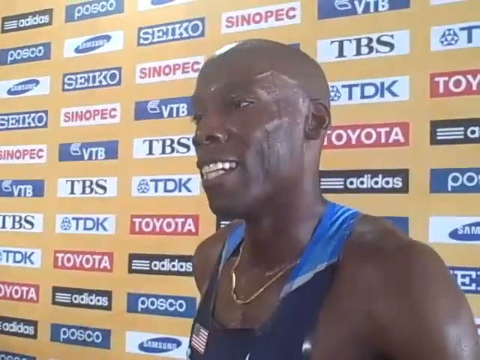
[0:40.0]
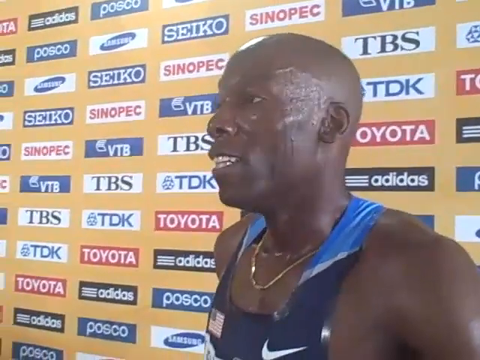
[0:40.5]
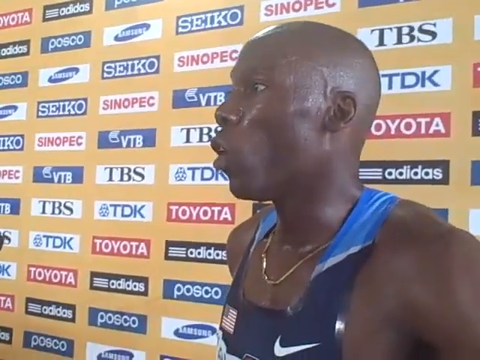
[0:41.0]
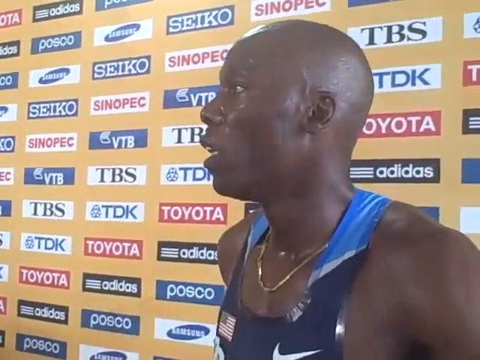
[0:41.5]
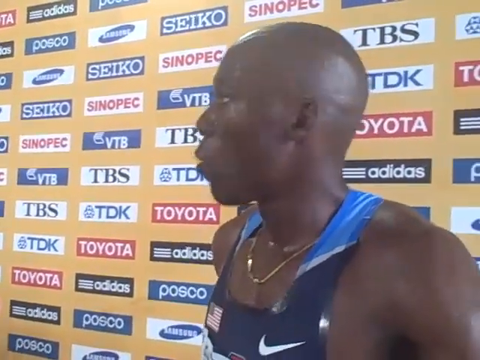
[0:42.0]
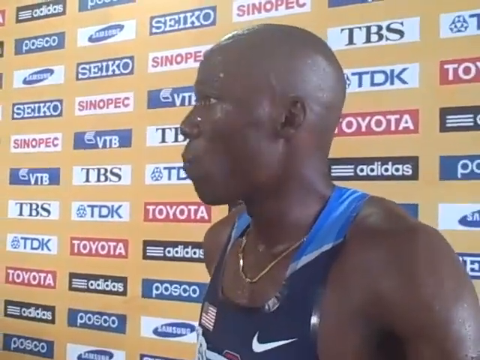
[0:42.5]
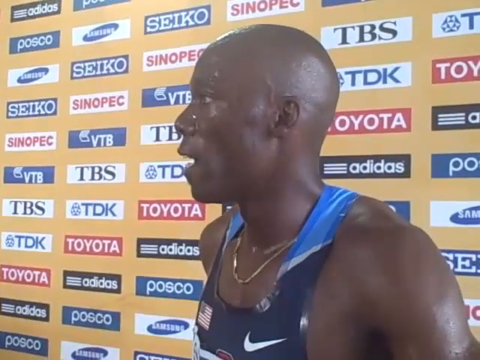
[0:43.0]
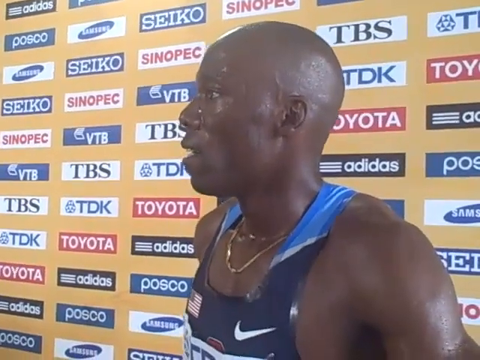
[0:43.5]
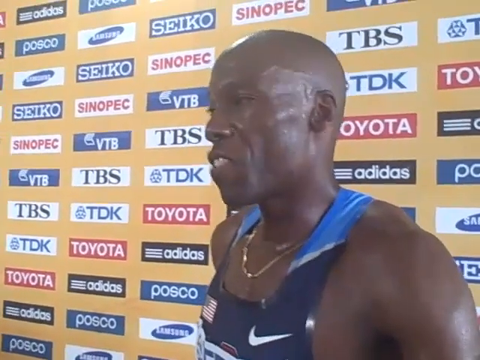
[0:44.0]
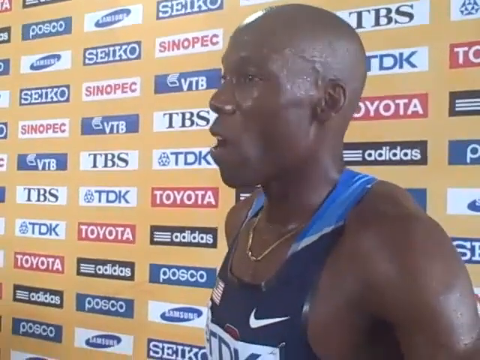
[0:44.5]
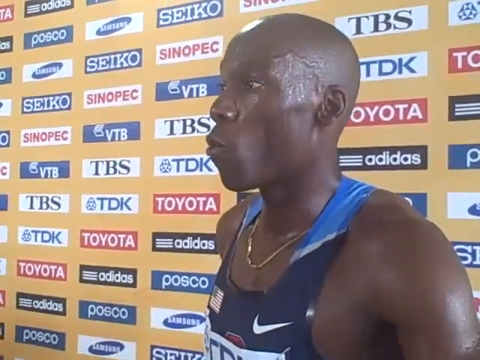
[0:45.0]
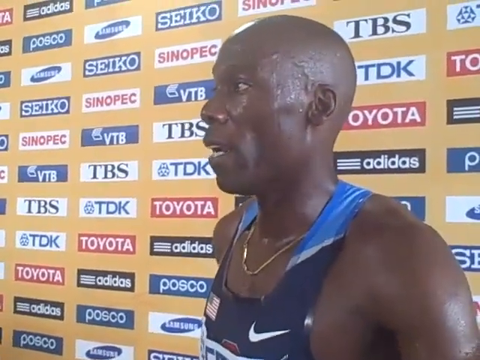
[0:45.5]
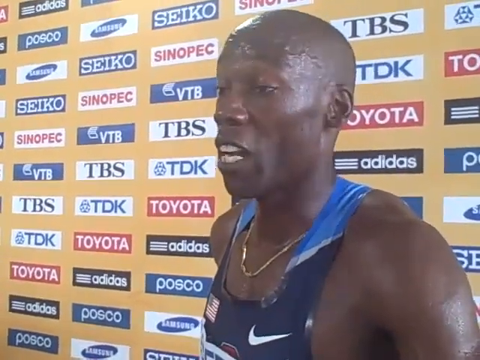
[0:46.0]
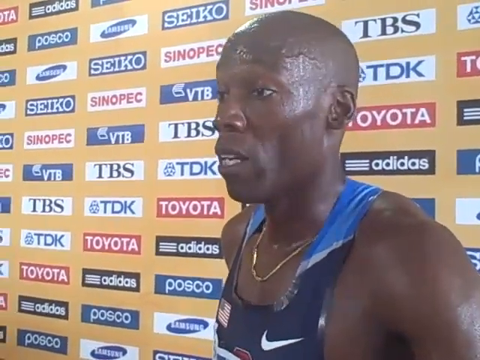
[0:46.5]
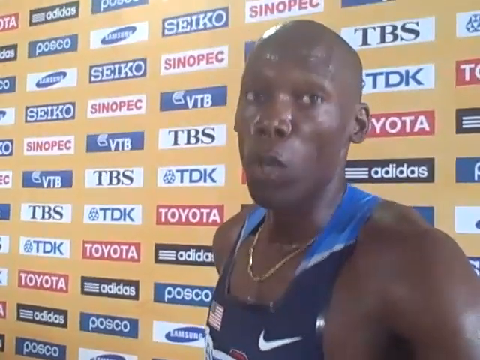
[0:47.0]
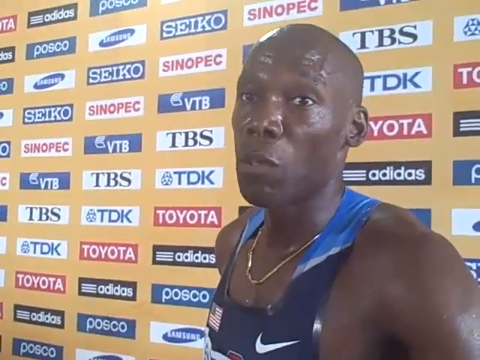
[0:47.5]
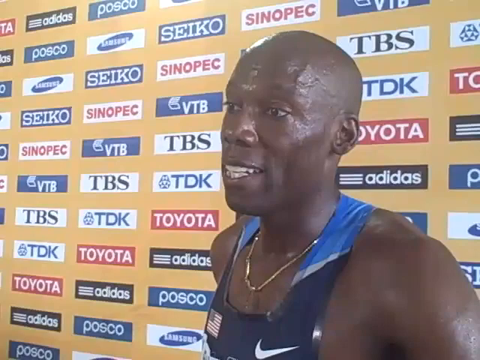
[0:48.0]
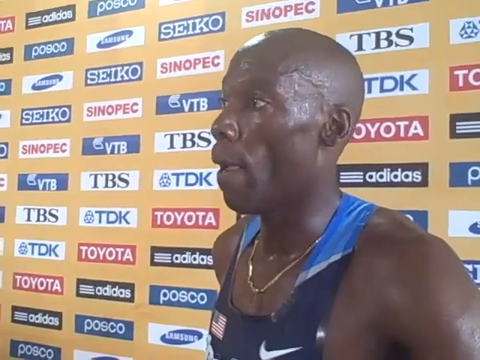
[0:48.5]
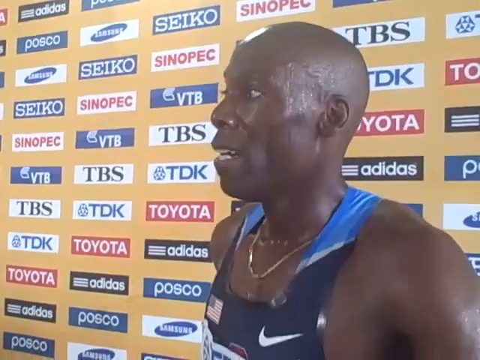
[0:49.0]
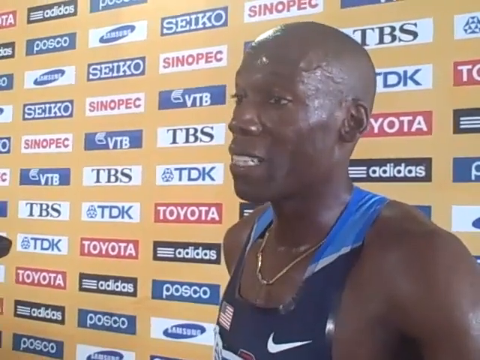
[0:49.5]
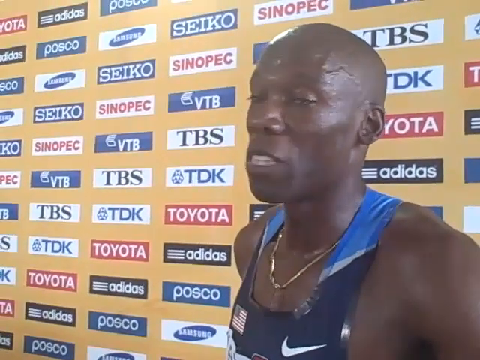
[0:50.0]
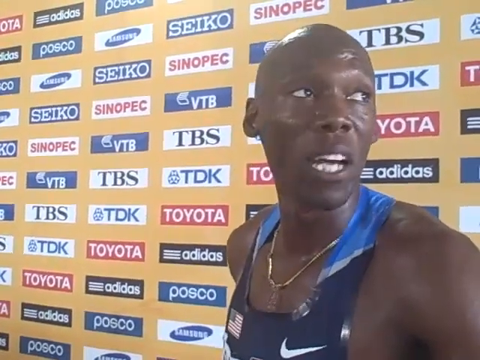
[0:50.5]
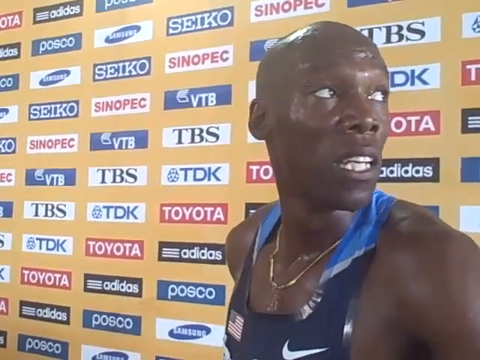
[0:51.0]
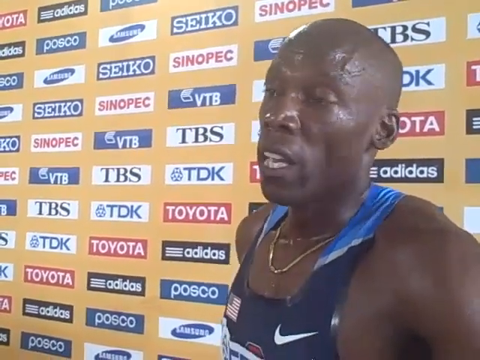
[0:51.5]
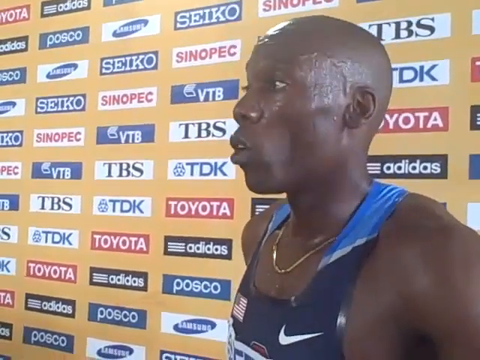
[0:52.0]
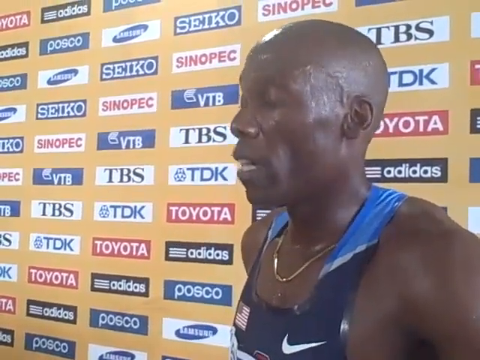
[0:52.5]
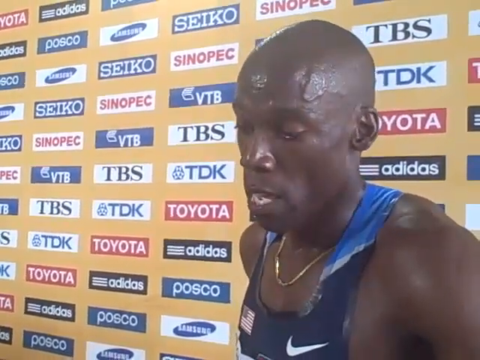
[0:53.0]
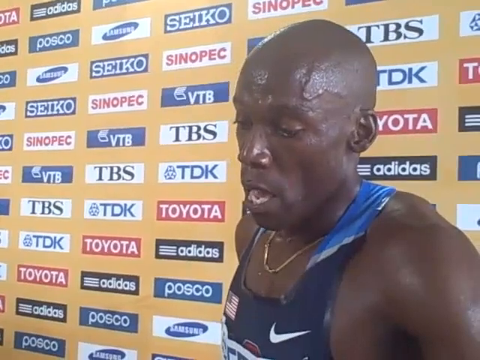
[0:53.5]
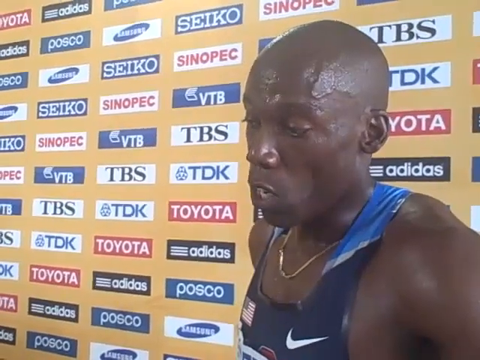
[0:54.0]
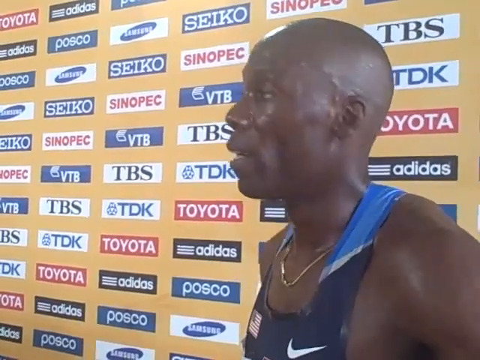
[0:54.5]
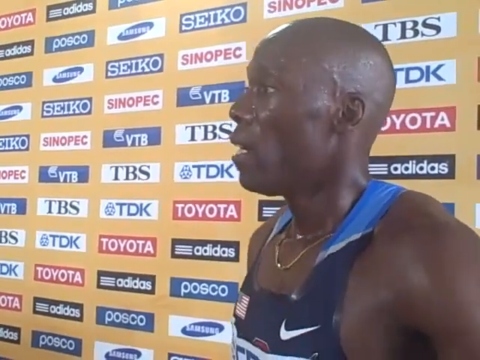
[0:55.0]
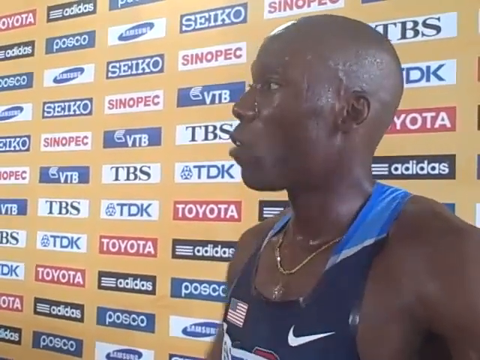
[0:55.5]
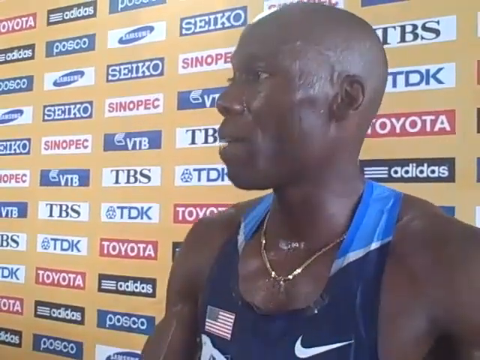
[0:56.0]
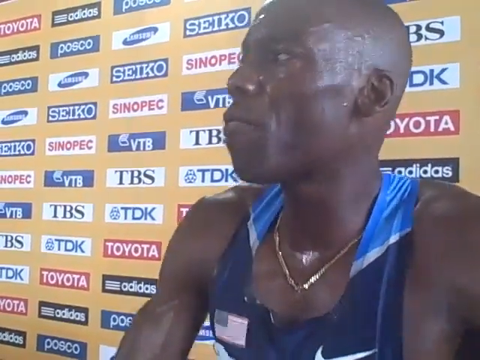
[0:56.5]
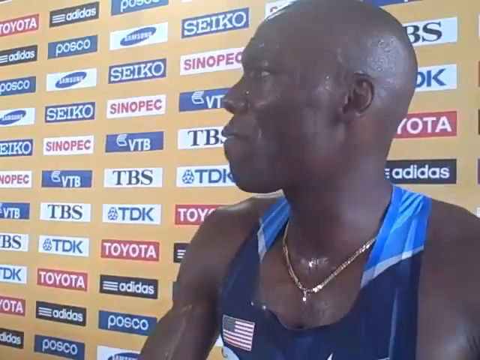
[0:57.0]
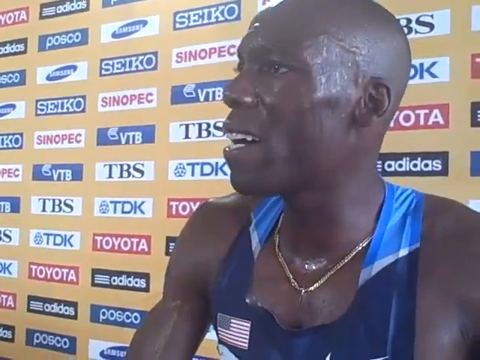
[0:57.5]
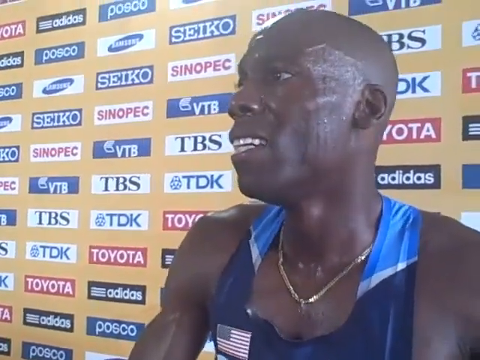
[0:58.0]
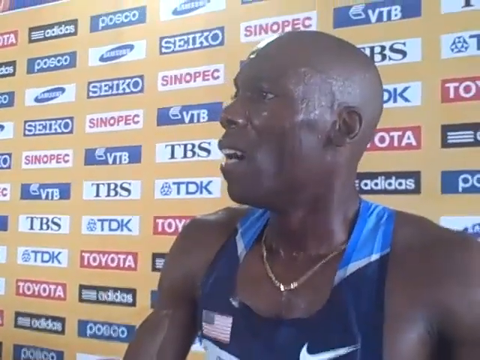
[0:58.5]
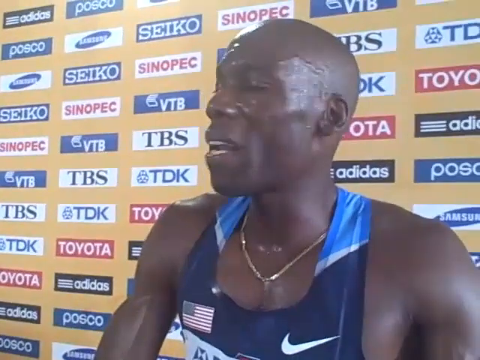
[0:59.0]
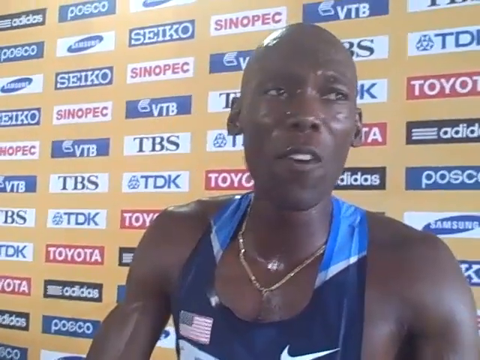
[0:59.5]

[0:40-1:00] The reporter asks a quick question, and the athlete keeps responding very quickly. He is still breathing heavily, his tongue a bit out to lick his lips, and the veins near his forehead bulge out. His chest is really sweaty, and the lighting makes the sweat glisten on his skin; he has white teeth. He mostly faces the reporter while talking, but later adjusts his body to face the camera, and near the end he looks like he is leaning on some sort of barrier. He has no hair, though a very tiny bit of hair growth is sort of visible where the follicles would grow. He seems pretty athletic, with a substantial amount of muscle on his arms.